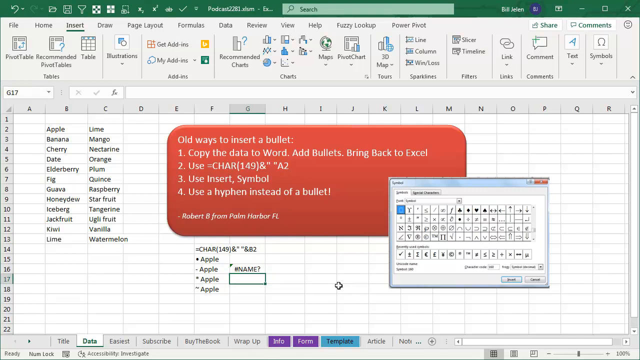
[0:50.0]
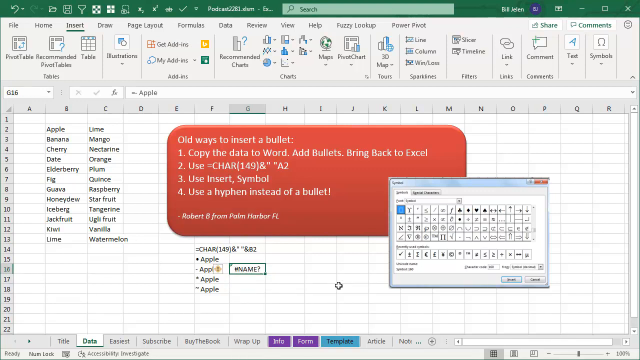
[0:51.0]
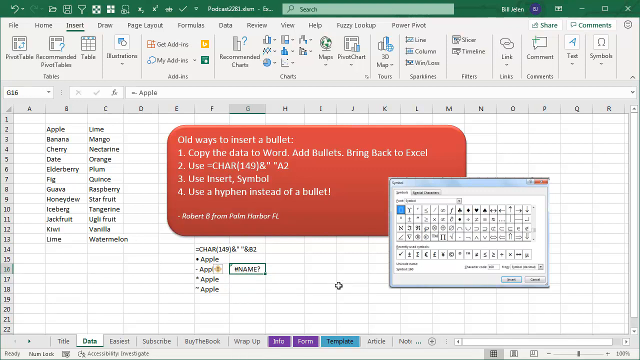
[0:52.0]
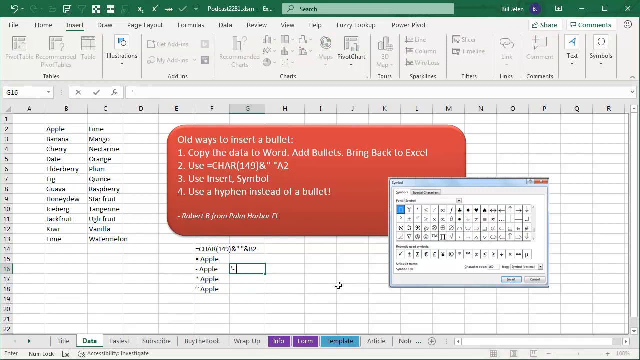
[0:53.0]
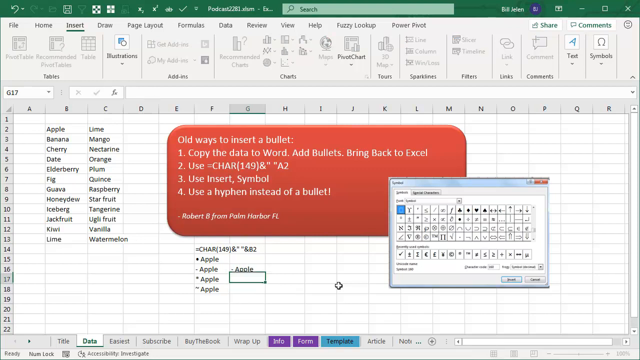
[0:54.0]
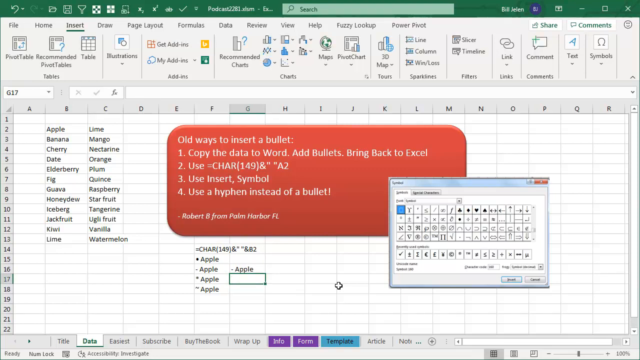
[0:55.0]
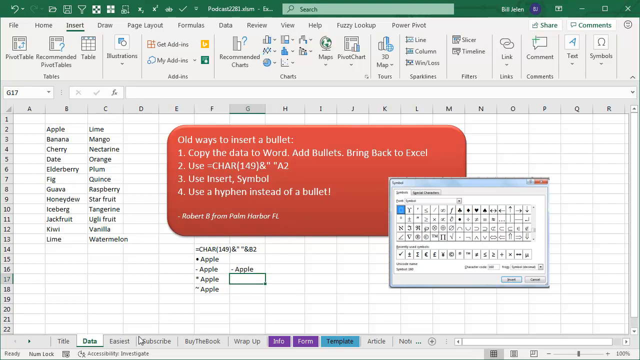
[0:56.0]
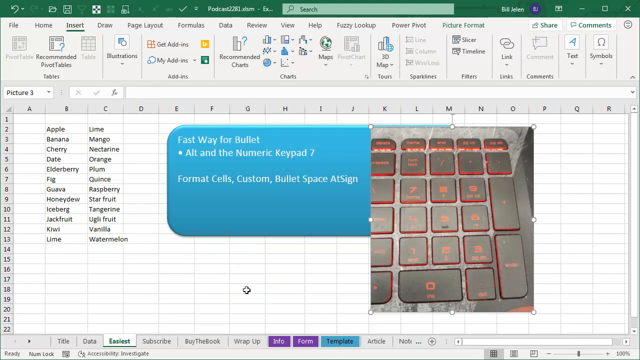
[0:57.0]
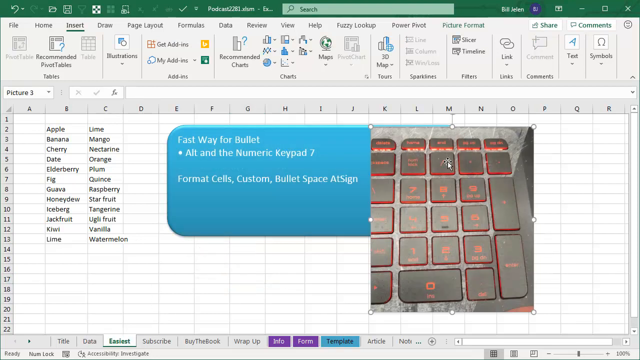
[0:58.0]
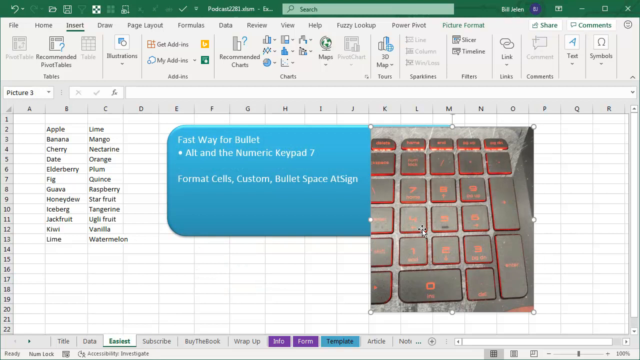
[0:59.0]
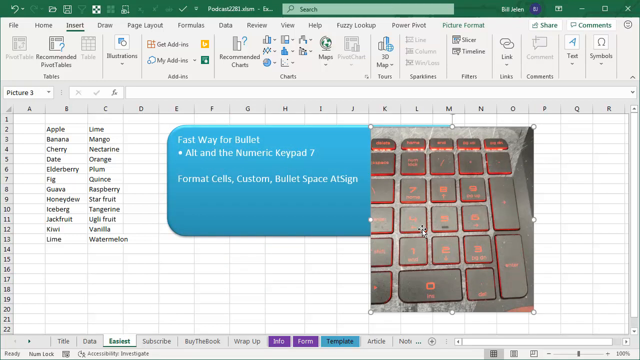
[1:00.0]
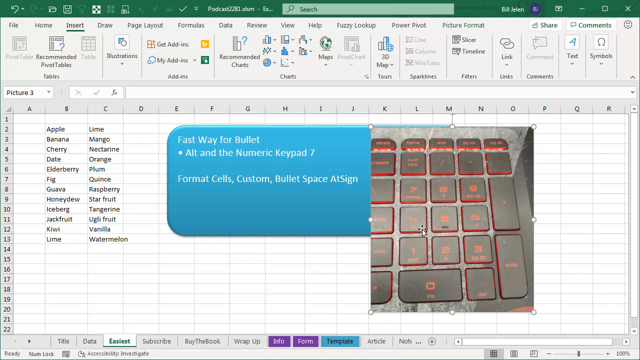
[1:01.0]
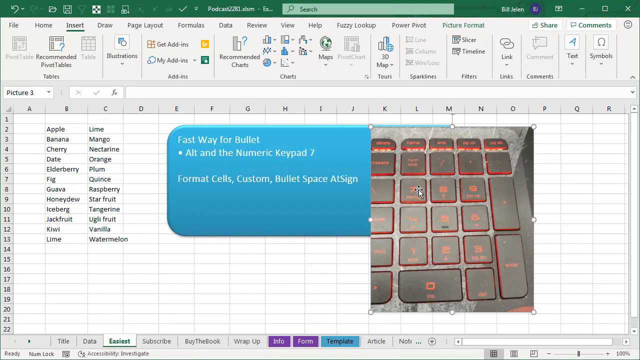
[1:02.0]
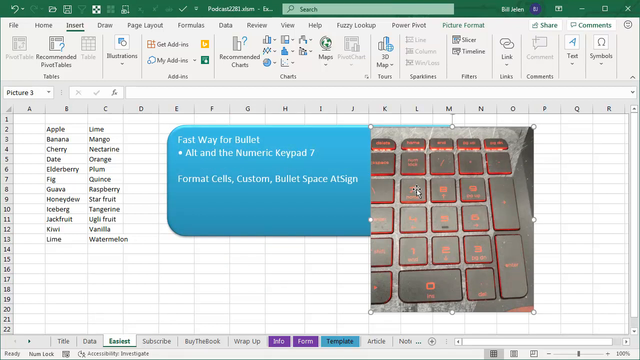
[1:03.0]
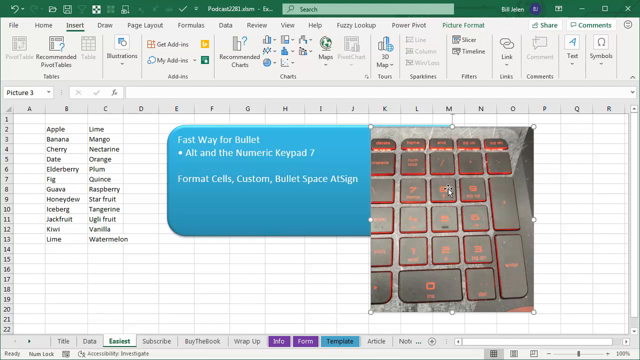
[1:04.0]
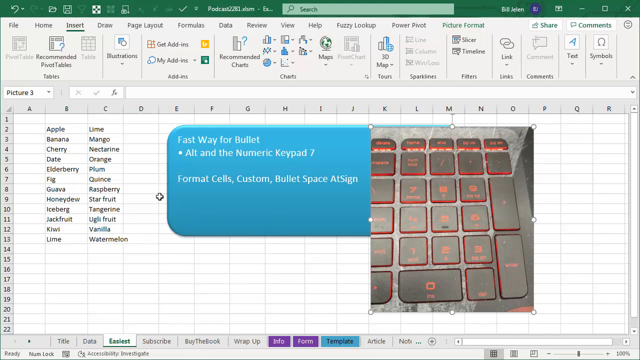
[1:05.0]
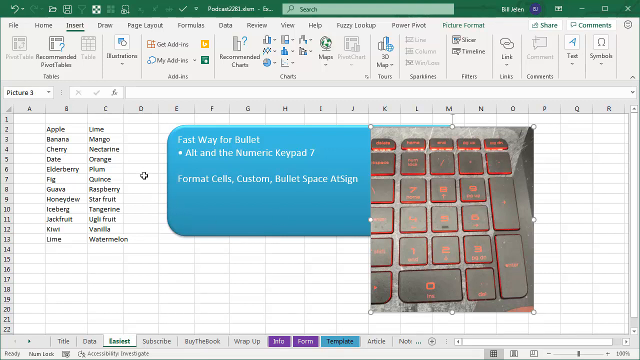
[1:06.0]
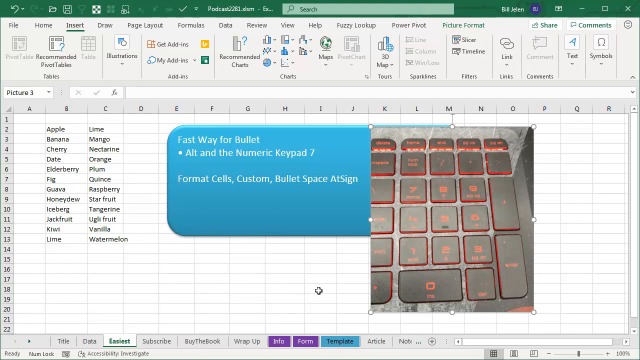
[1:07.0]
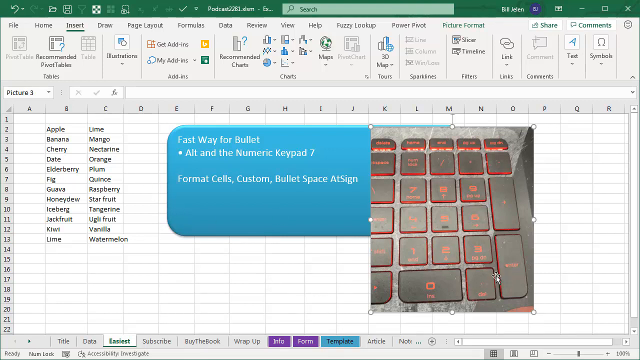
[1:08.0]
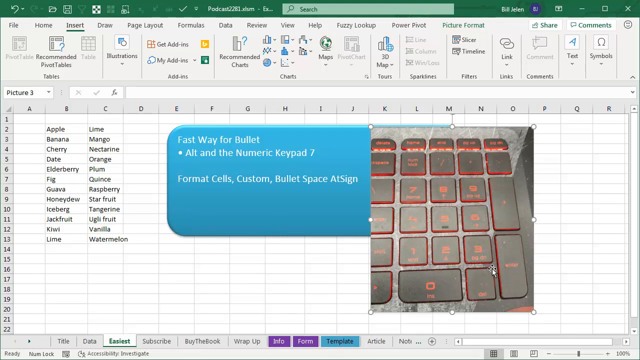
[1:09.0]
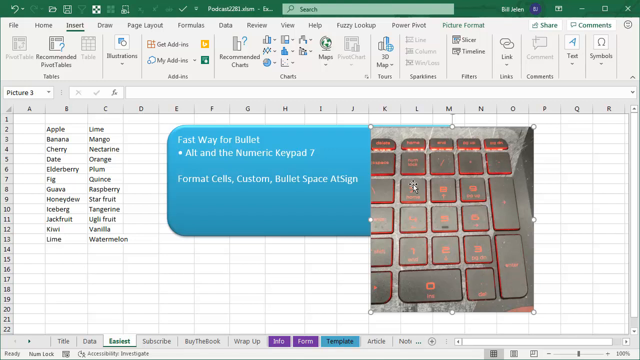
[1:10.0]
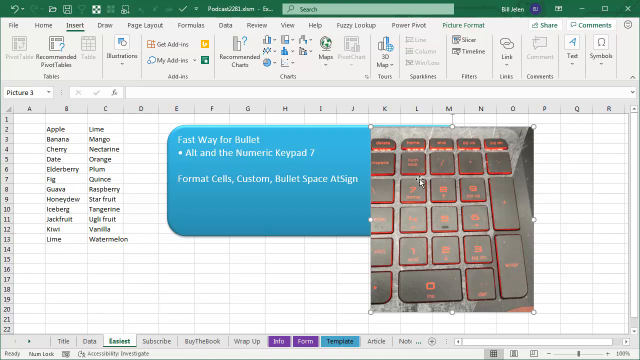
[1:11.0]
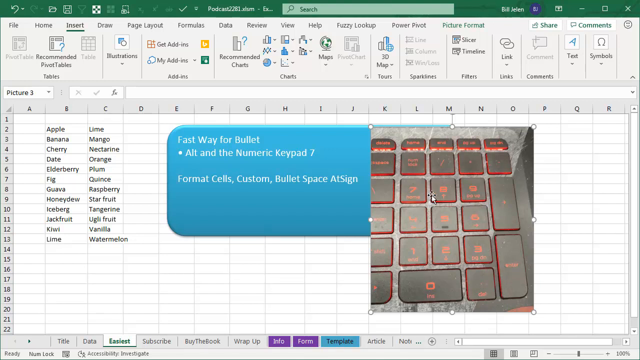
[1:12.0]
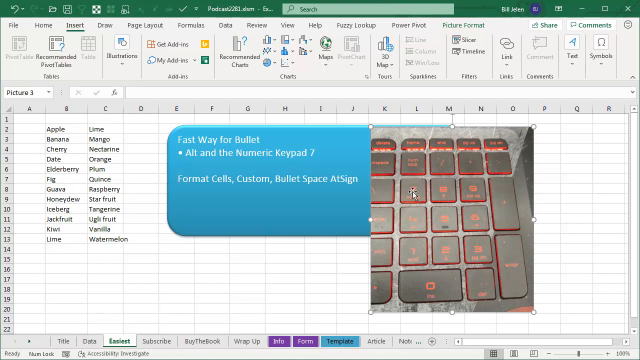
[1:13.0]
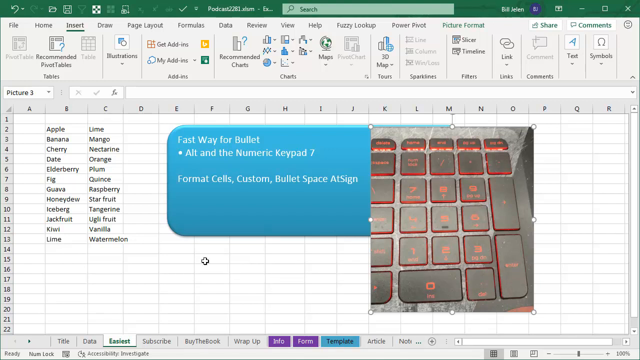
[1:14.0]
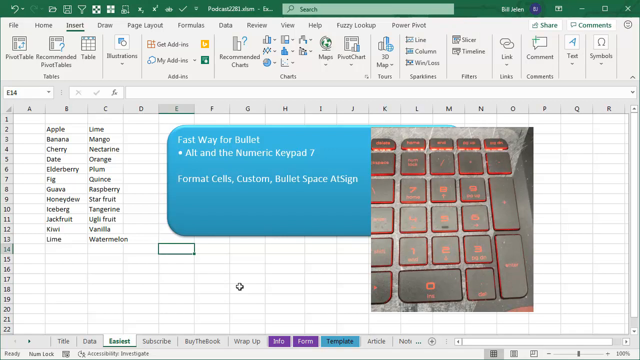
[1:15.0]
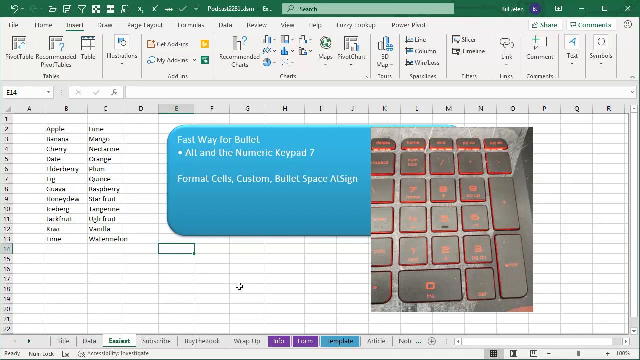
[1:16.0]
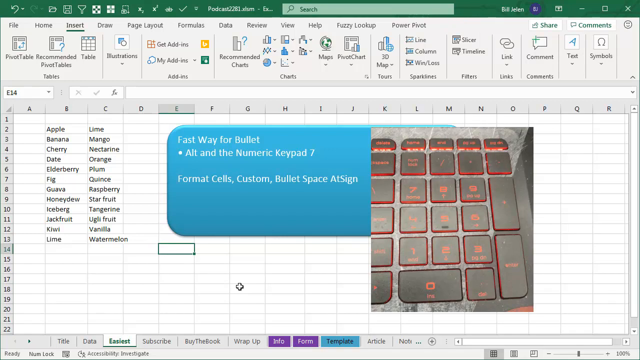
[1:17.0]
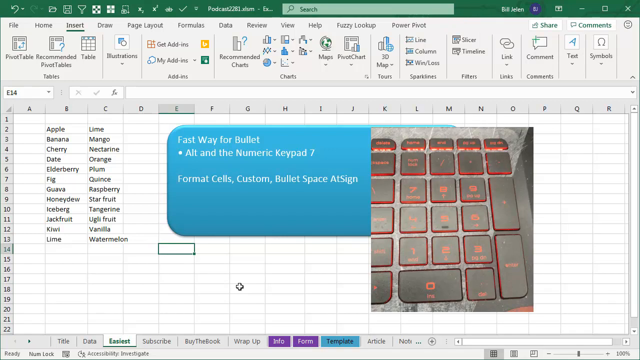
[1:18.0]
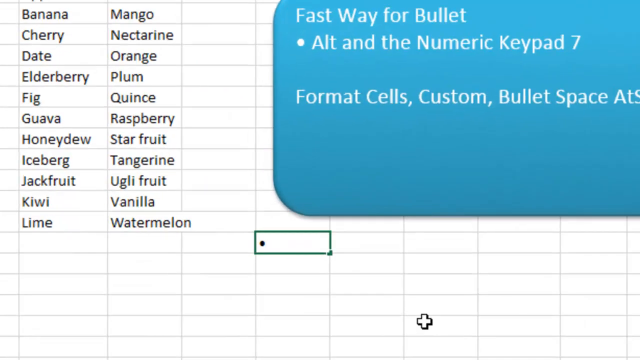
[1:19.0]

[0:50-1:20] A mouse cursor moves on an Excel spreadsheet while someone types into a cell in column G, entering an asterisk followed by the word Apple. The mouse moves over and a different image appears on the spreadsheet: a blue box with white text reading "fast way for bullet", giving a shortcut of alt and the number keypad 7. Next to it is an image of the short square keyboard on a laptop, the number pad, and the cursor makes a sweeping circular motion over it, showing which keys to press for the shortcut written in the box.